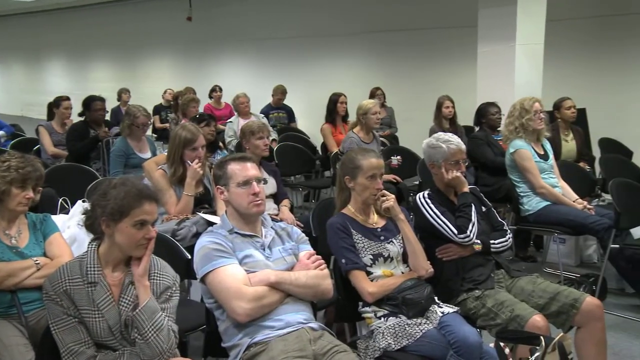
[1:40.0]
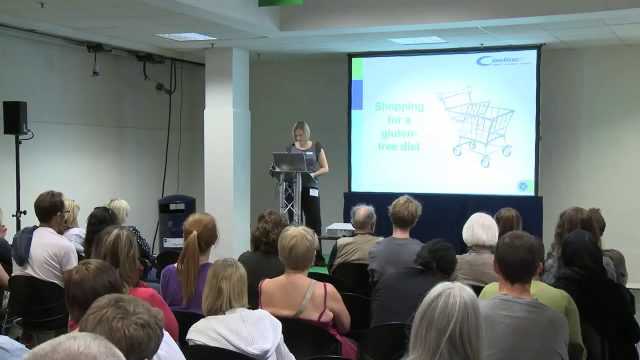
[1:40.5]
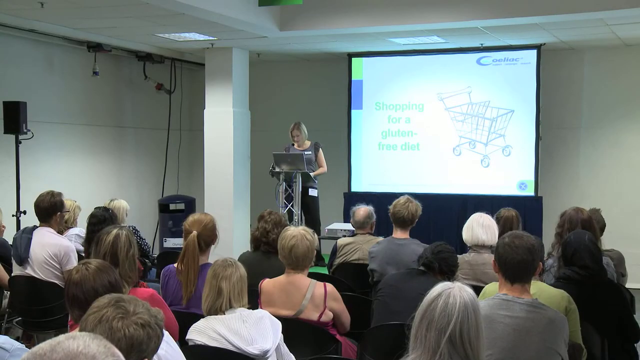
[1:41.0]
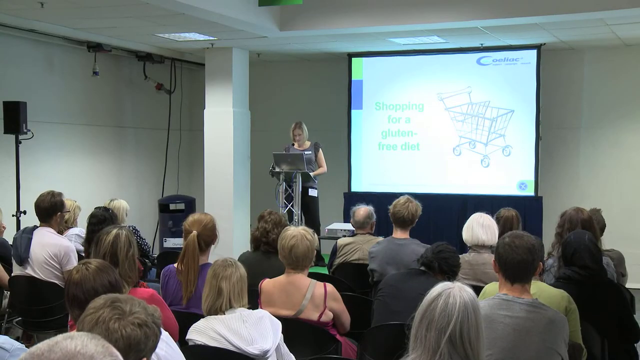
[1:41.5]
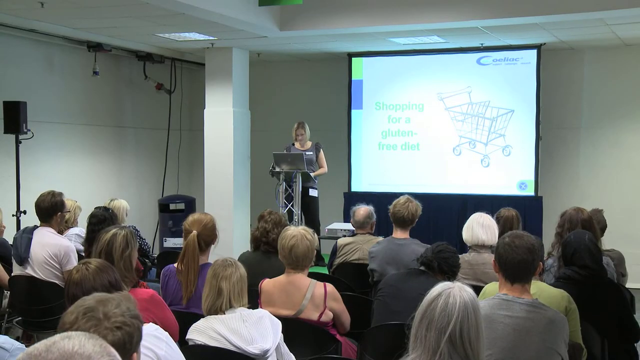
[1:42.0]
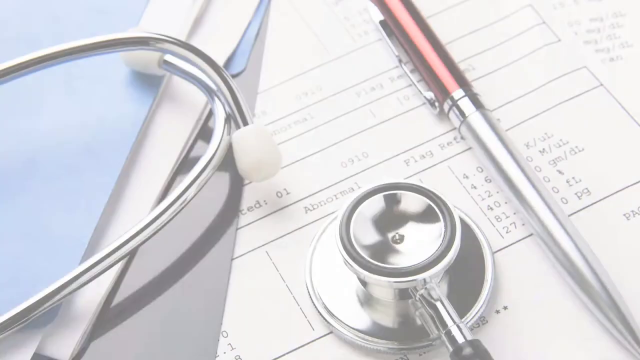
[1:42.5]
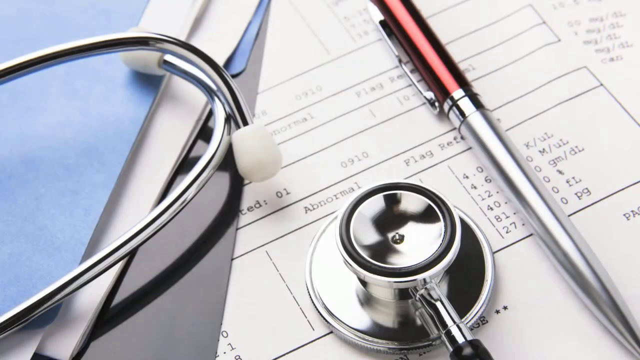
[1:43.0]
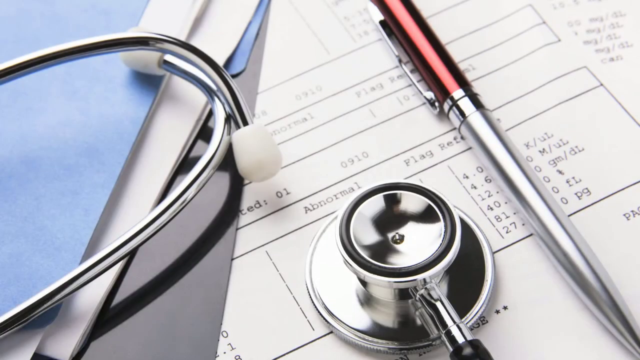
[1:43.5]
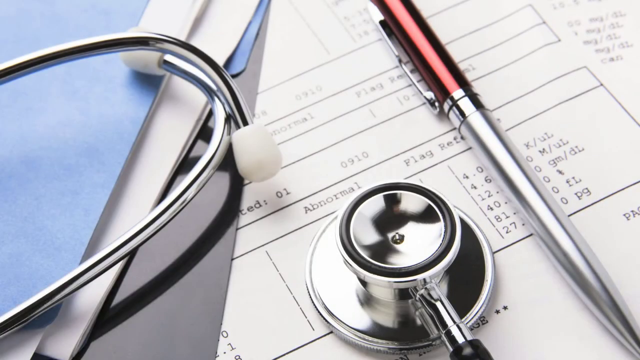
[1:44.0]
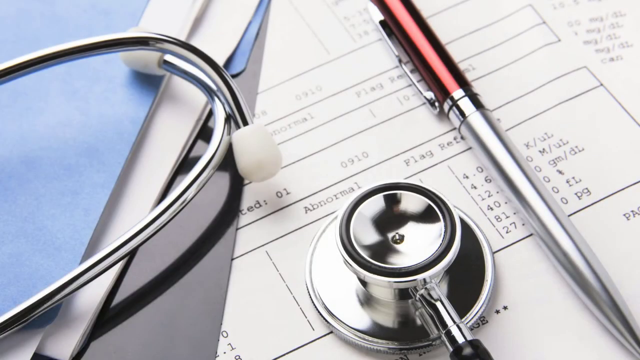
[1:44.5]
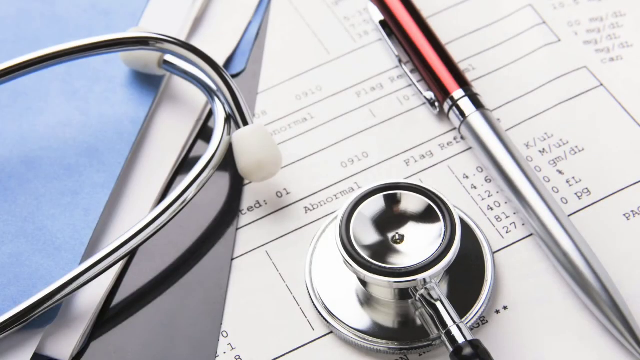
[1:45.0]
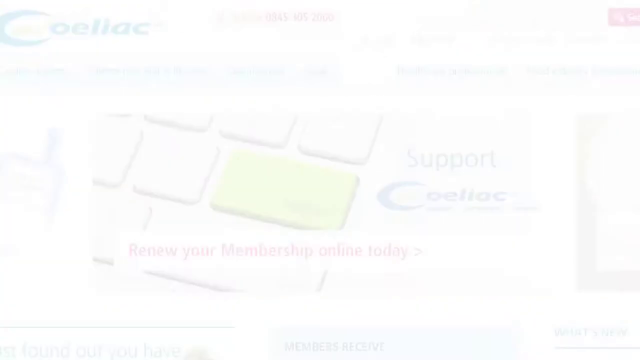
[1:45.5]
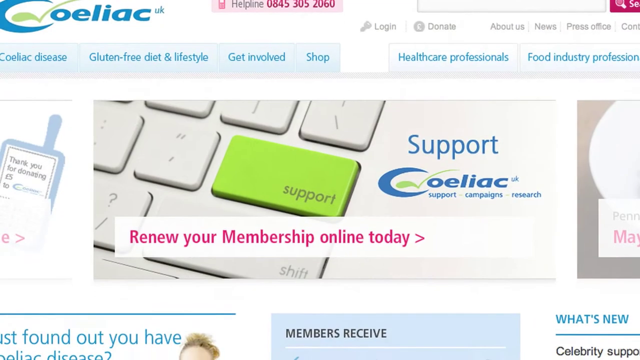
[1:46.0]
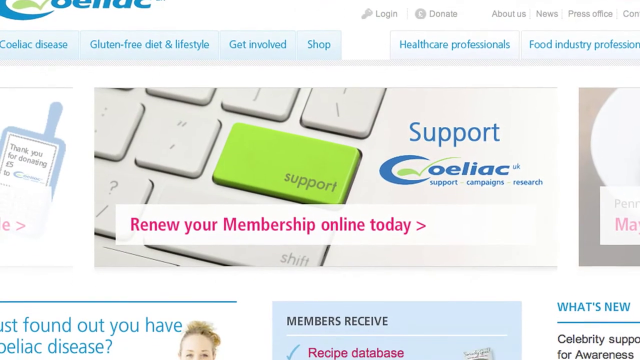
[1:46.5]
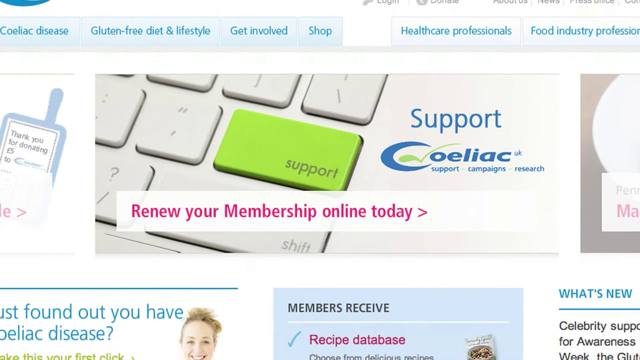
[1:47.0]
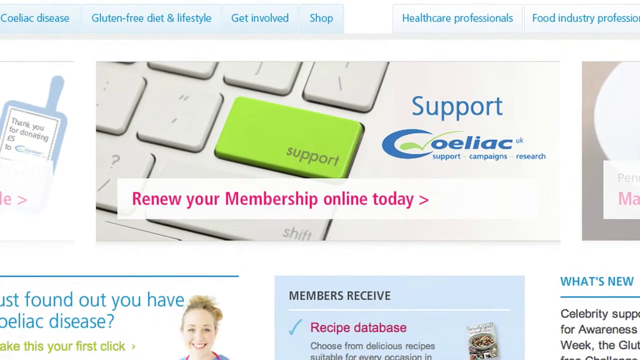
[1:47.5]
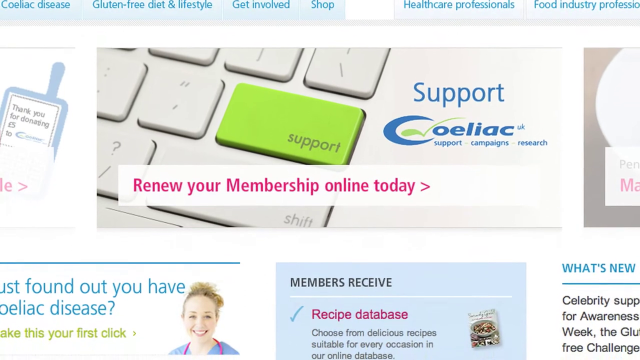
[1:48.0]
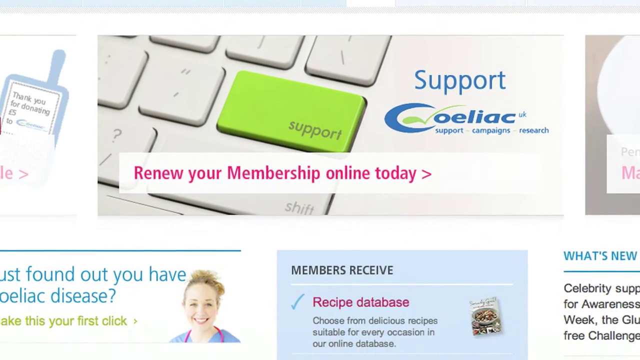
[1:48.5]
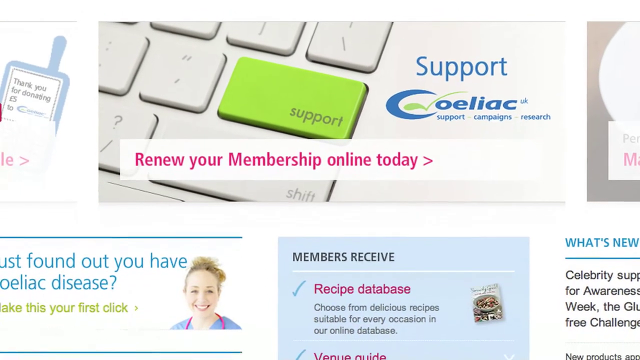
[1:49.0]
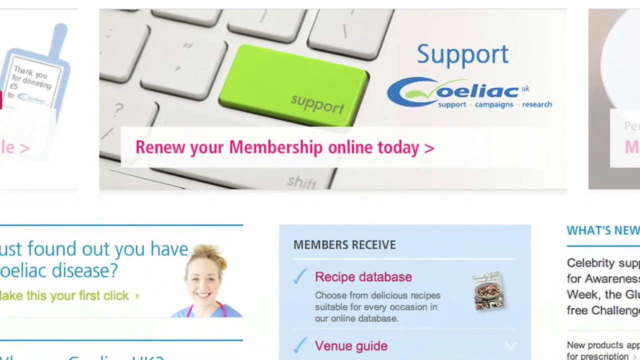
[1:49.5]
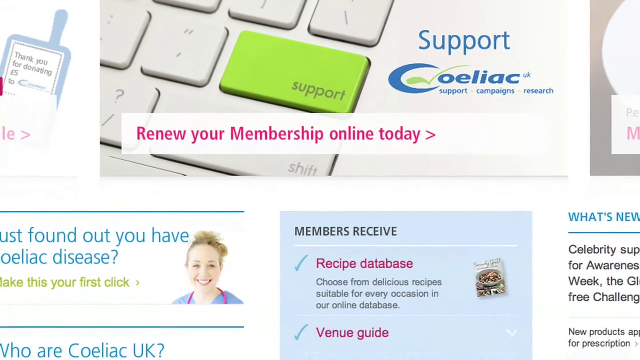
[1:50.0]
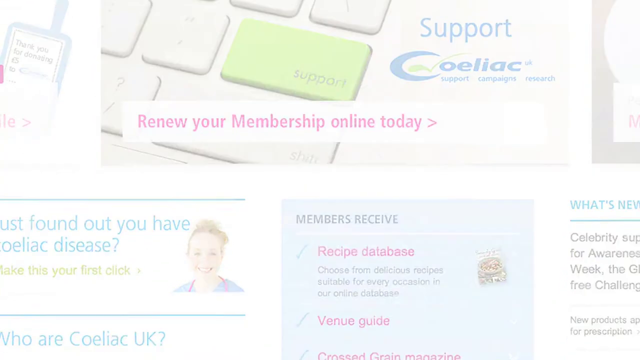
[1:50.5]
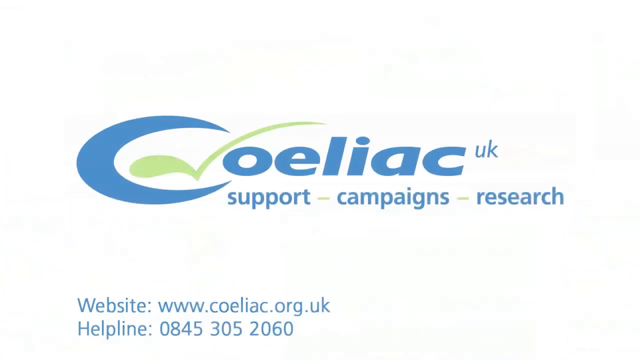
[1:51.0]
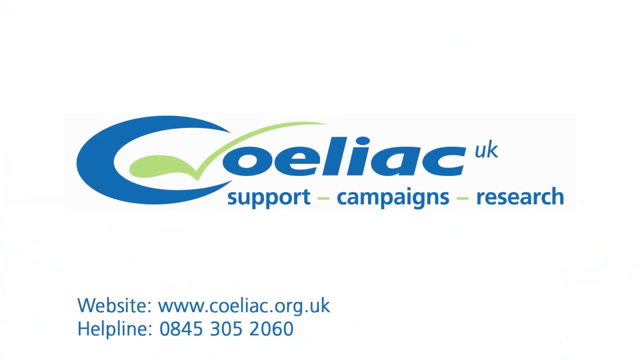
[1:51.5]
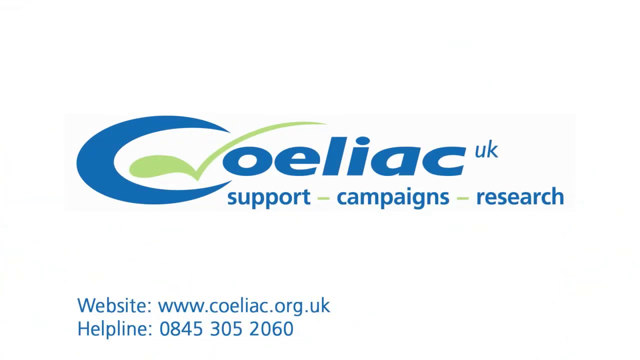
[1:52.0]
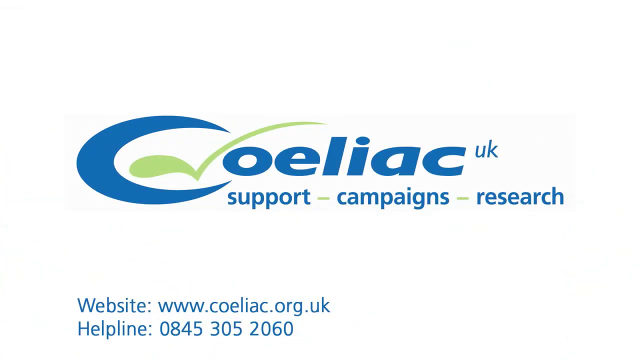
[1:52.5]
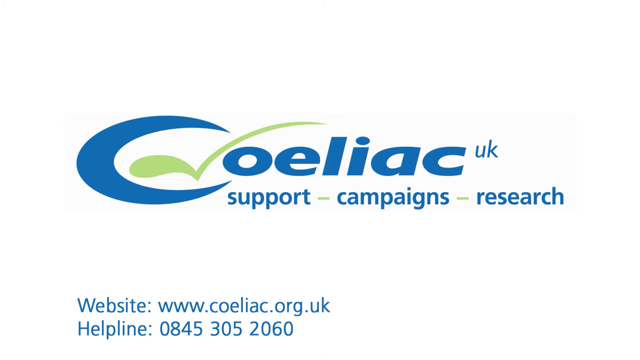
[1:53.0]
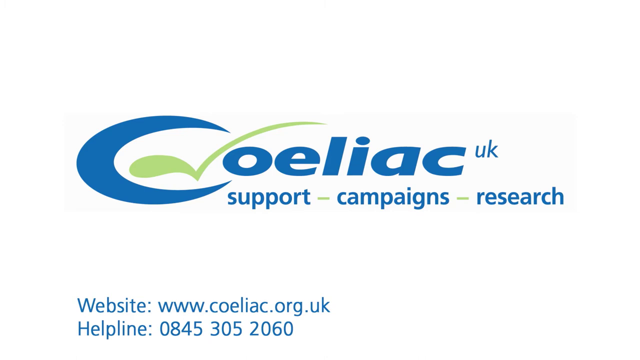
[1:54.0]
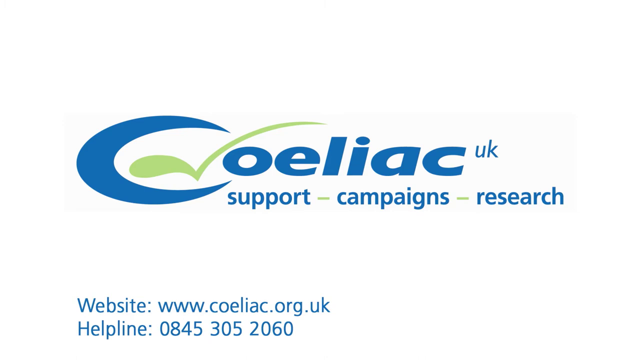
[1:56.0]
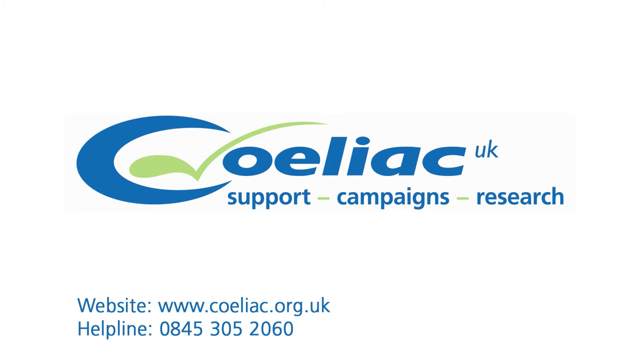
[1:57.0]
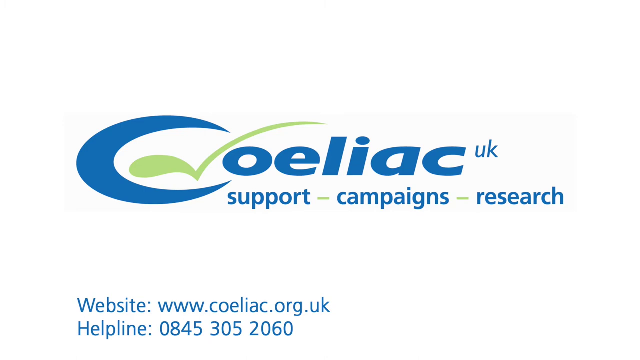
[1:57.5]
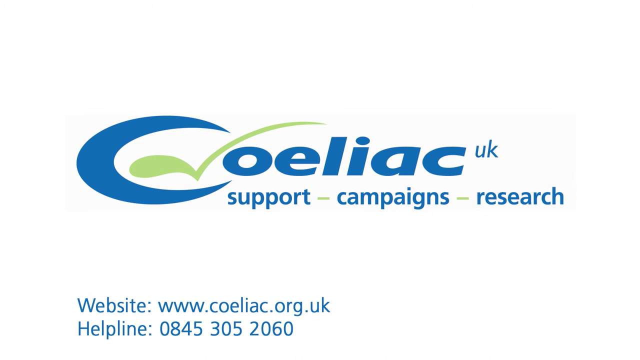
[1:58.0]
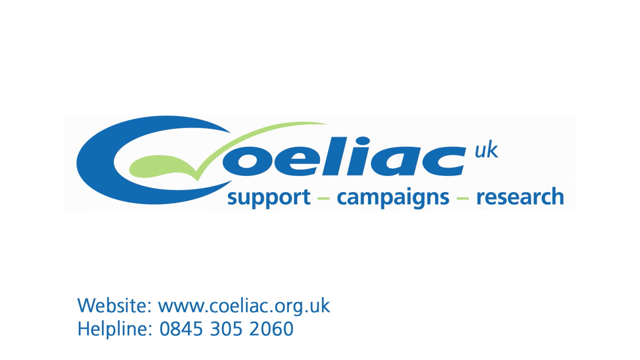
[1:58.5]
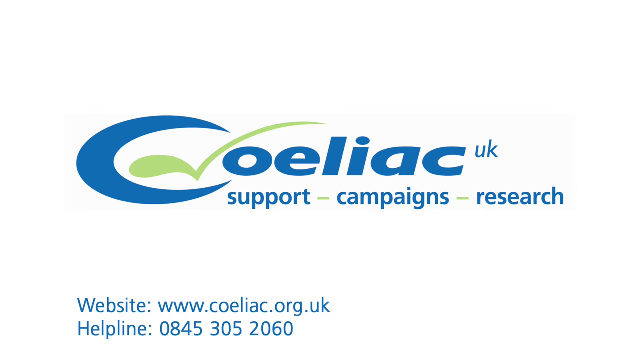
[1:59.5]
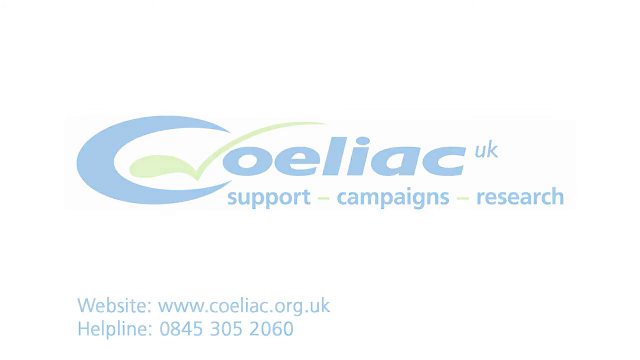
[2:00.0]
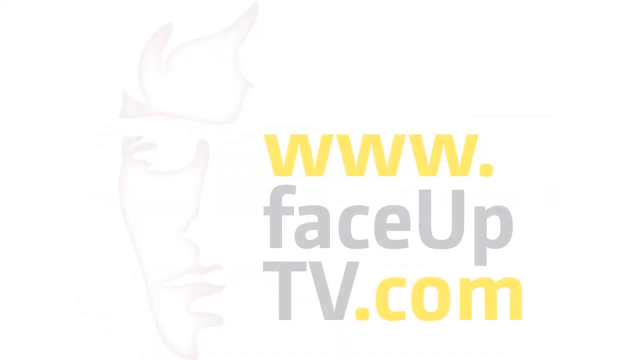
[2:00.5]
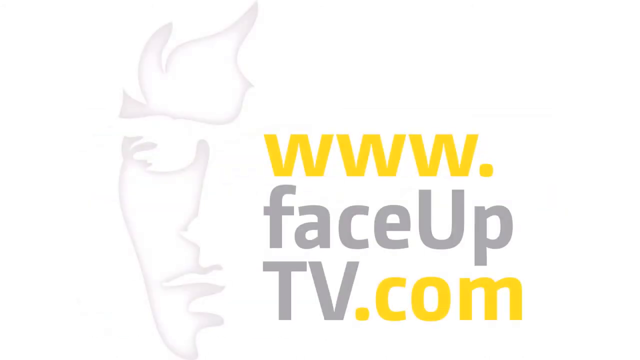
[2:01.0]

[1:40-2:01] A presenter speaks to a group; the presenter is the same woman who was interviewed earlier, and she appears to be standing at a podium. Then a screen shows what looks to be the organization's website homepage, with options at the top: "Coeliac Disease," "Gluten-Free Diet and Lifestyle," "Get Involved," "Shop," "Healthcare Professionals," "Food Industry Profession." A pop-up reads "Renew Your Membership Online Today," and there appears to be a lot of different information on the page. The video closes on the organization's logo, blue on a white background, reading "Coeliac UK, Support, Campaigns and Research."